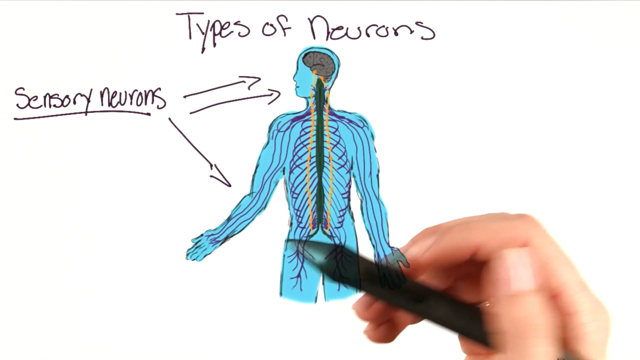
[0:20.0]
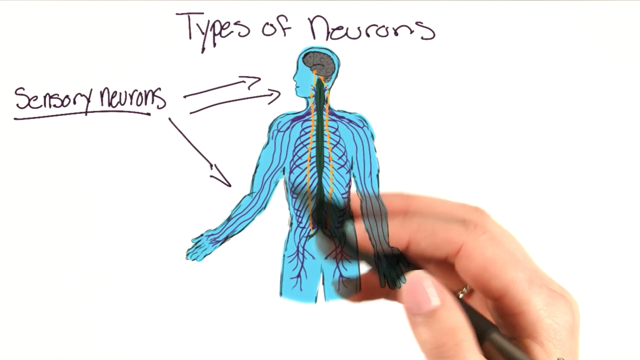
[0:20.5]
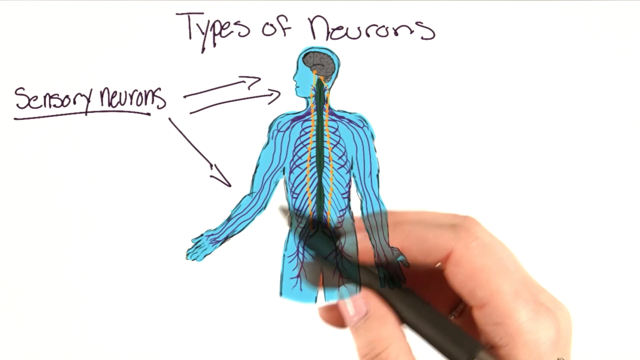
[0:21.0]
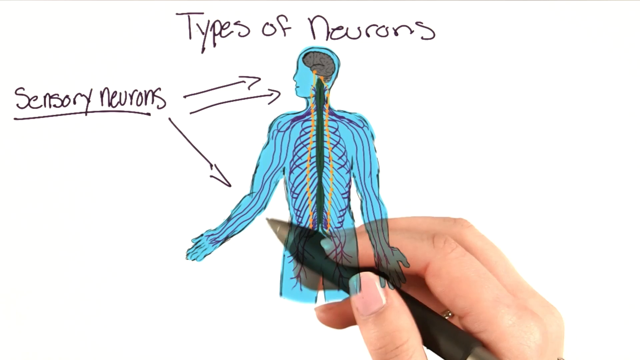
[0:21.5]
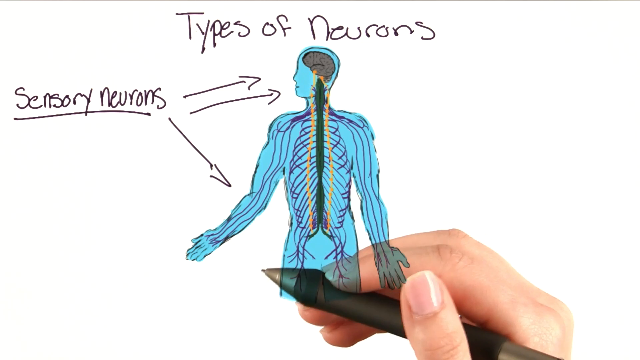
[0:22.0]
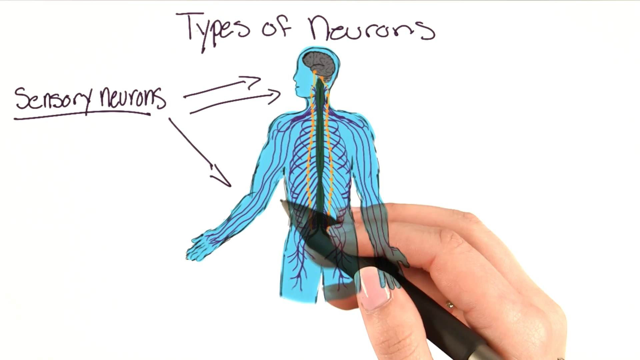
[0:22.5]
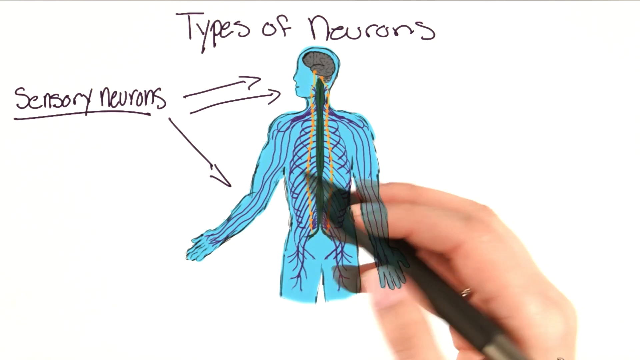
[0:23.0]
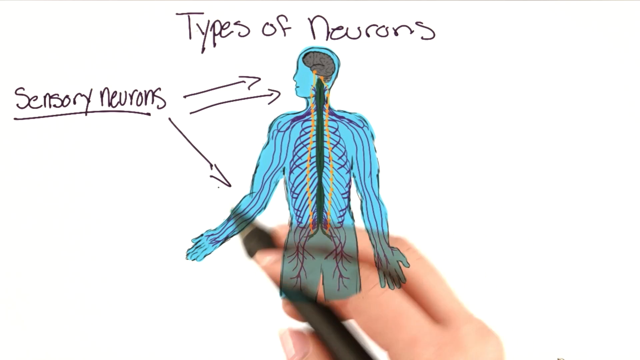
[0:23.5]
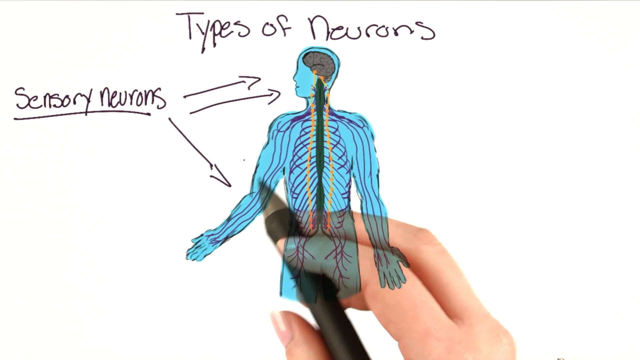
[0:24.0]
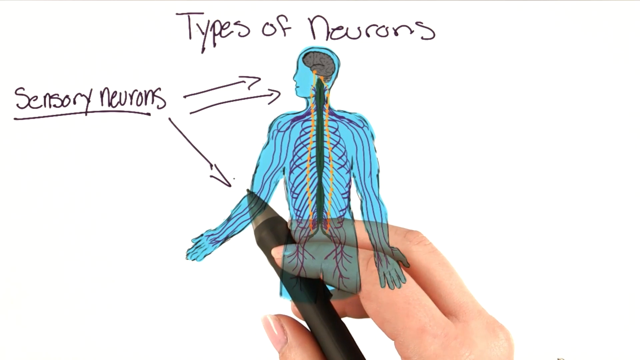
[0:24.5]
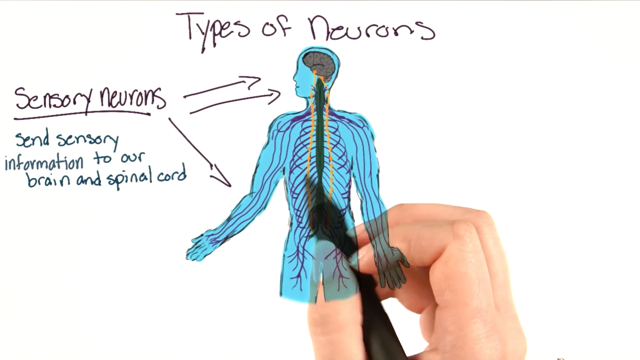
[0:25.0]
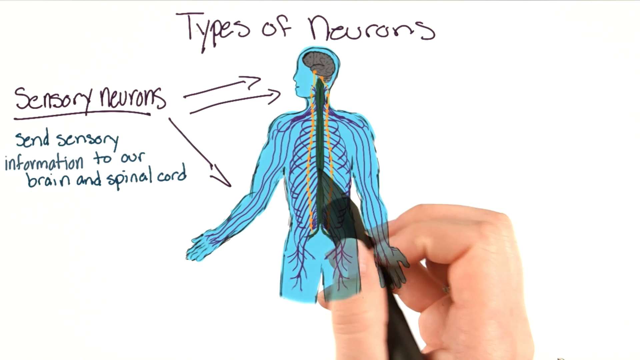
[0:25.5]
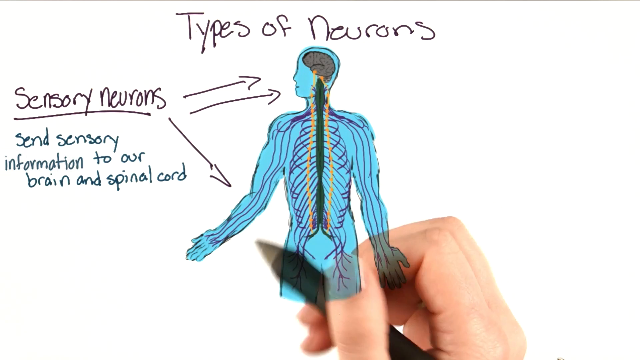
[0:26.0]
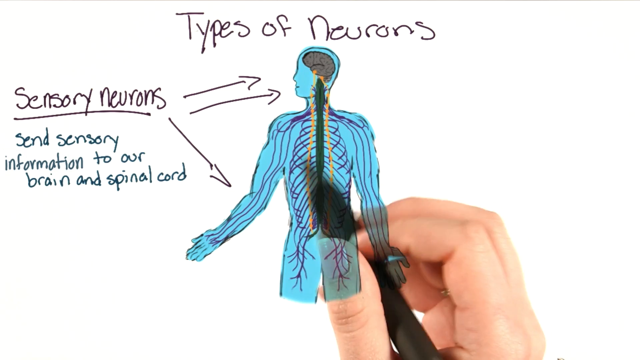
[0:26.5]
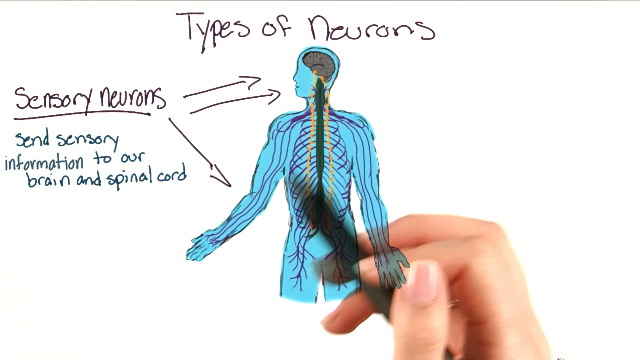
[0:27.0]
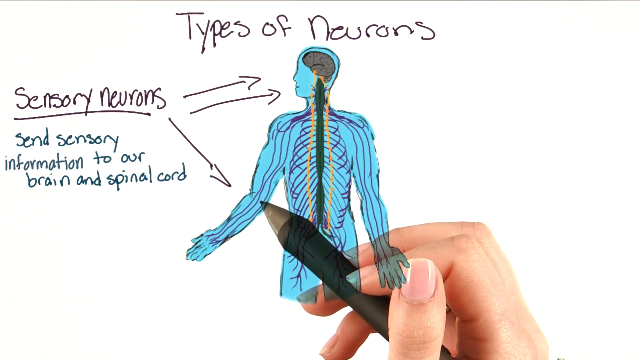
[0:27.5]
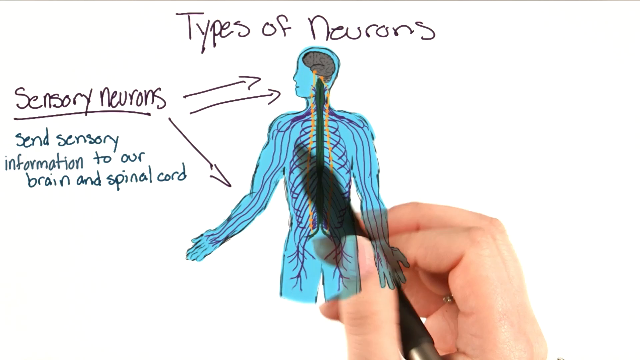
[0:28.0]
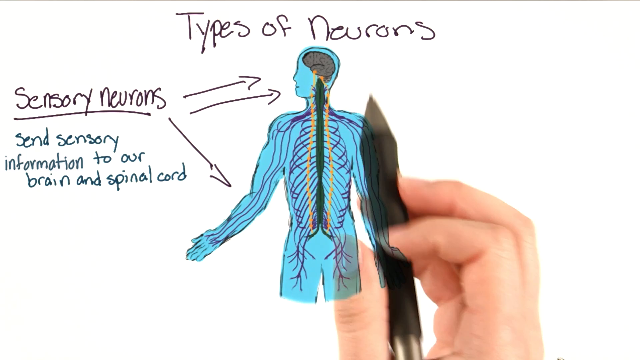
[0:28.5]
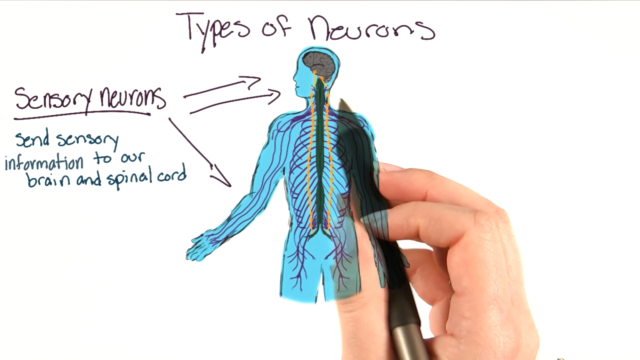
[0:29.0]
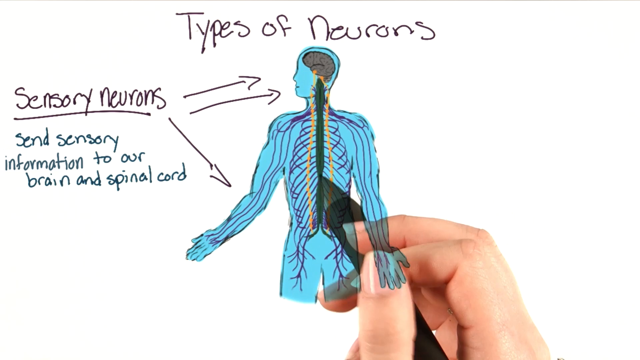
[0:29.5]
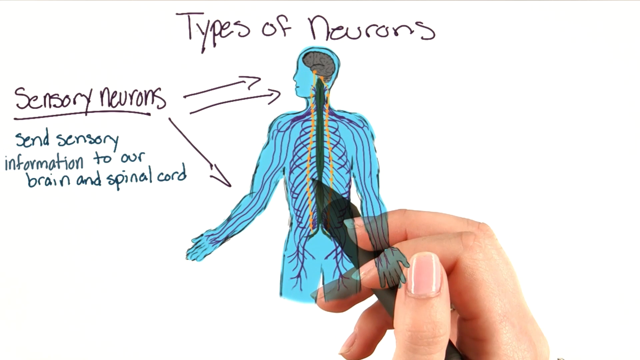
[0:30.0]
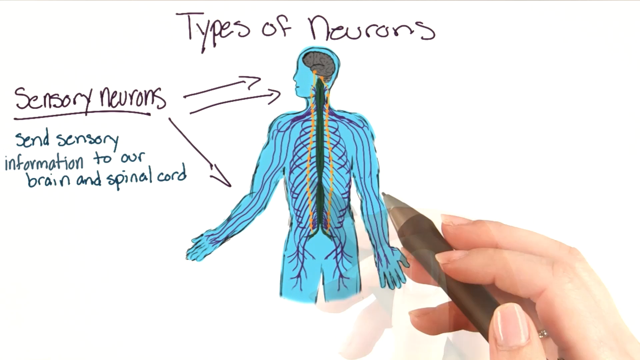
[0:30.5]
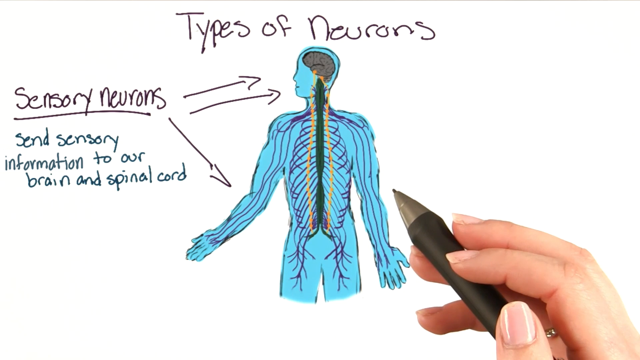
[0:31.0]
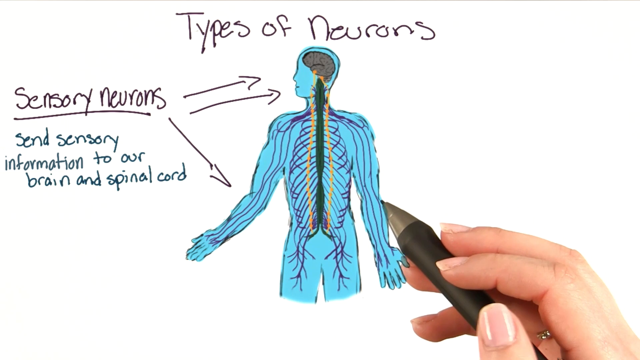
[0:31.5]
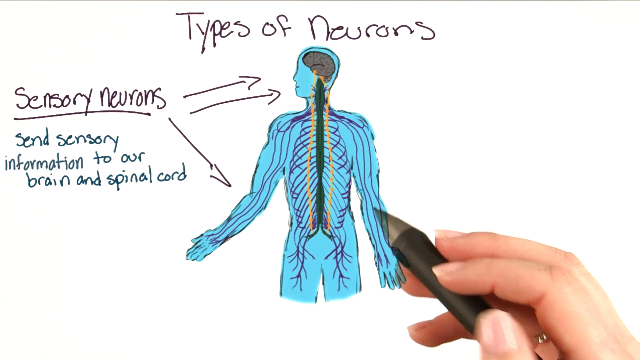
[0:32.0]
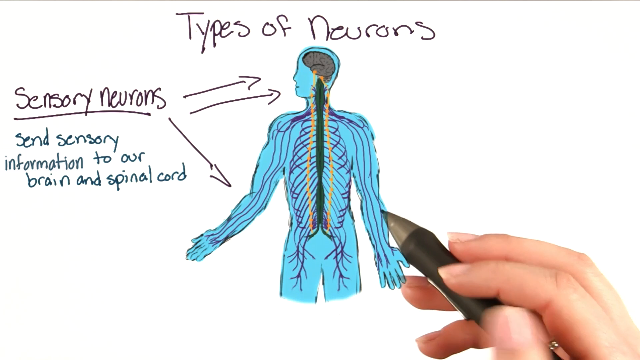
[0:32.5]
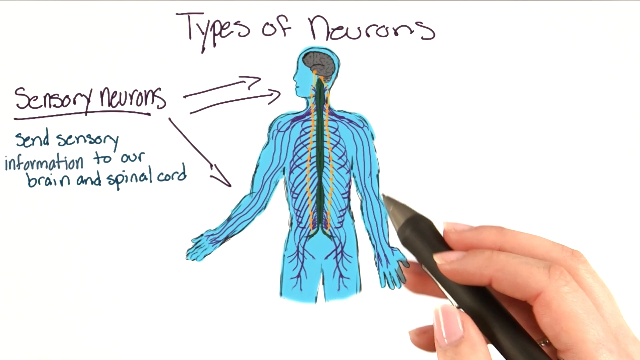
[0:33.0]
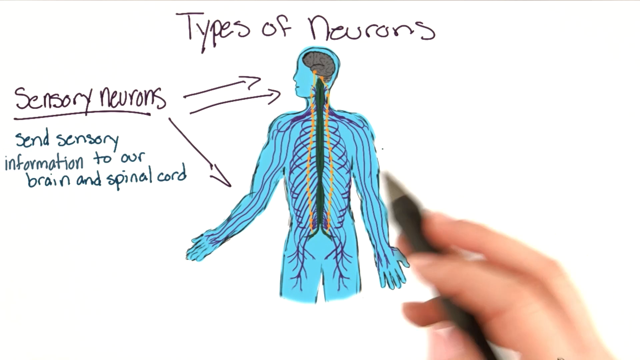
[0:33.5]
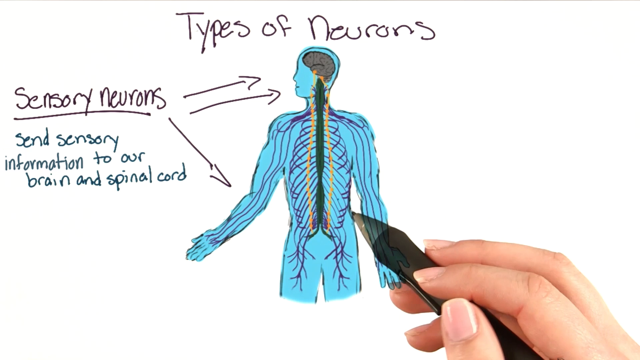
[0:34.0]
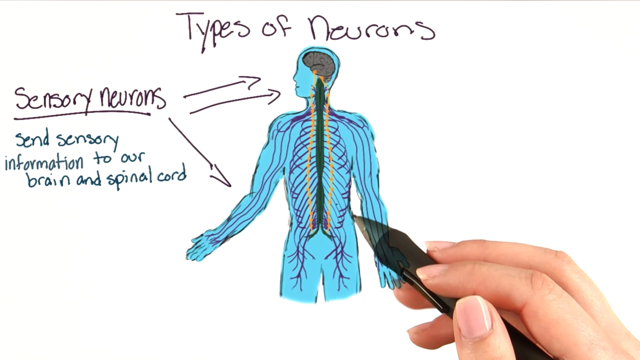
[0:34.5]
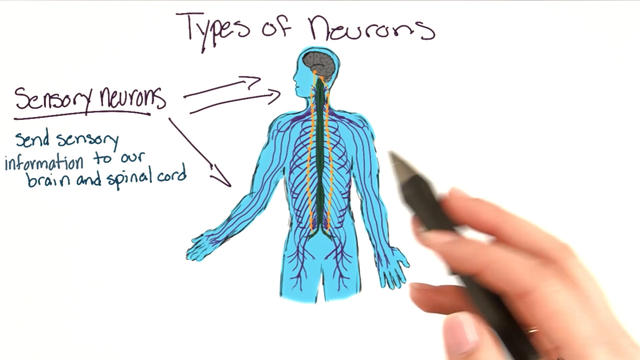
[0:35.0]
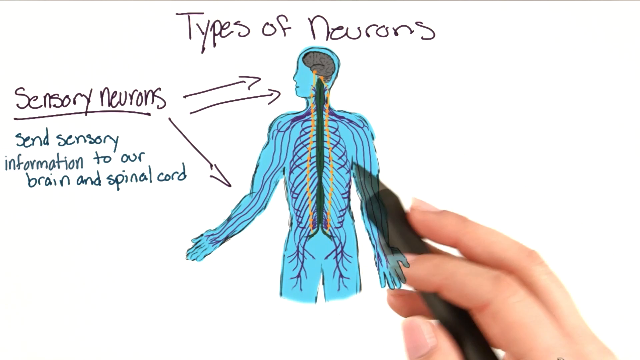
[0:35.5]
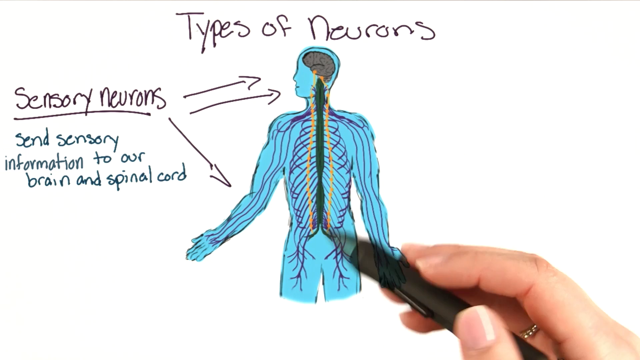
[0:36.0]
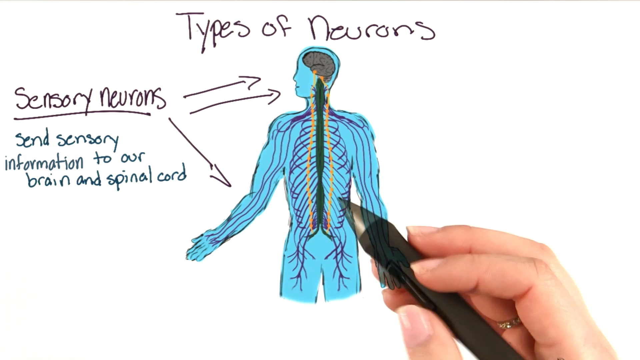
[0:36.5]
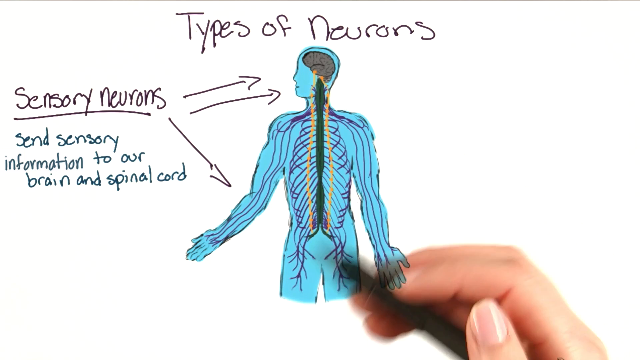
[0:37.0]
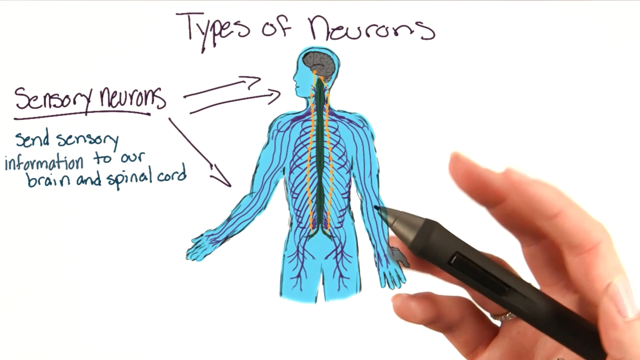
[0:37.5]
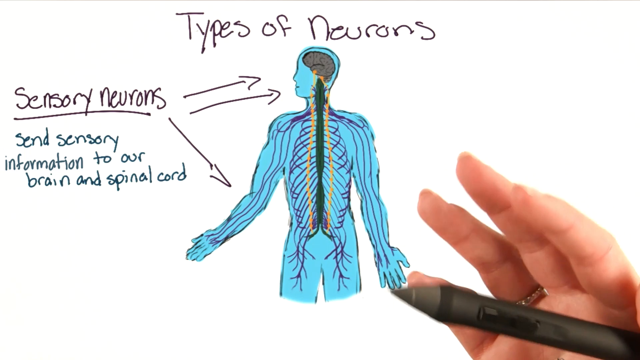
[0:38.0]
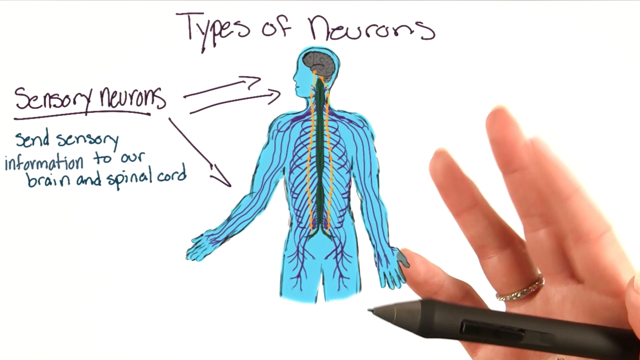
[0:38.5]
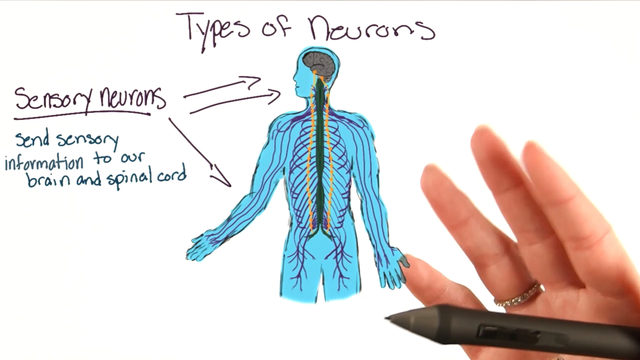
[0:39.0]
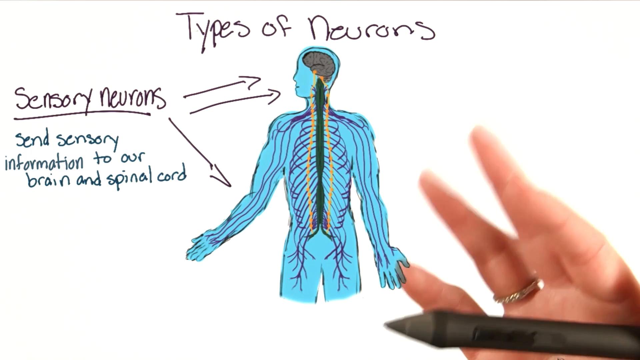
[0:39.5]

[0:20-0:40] A hand holding a pen goes over a drawing of a human figure colored light blue. The drawing shows only the neurons or nerves running through the body, from the head and spine down through the arms and body, represented in purple. The brain is gray and the spine is gray, and two yellow lines run horizontally from the brain to where "sensory neurons" is written on the left of the screen. Two arrows point at the head, and one arrow points down toward the left arm, which is slightly bent upward. Below "sensory neurons" it says "send sensory information to our brain and spinal cord." The pen, held on the right side of the screen, is used as a pointer to show the different parts.